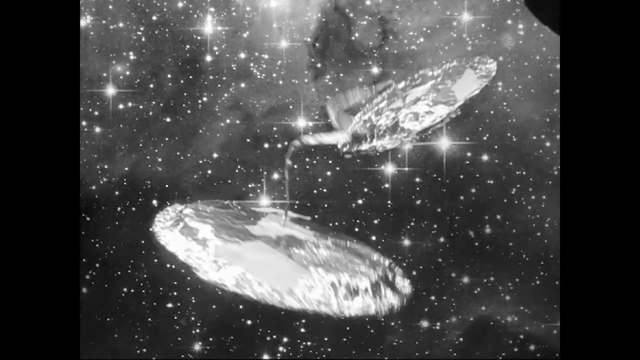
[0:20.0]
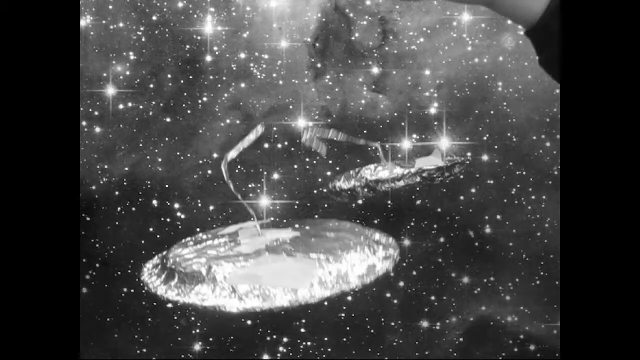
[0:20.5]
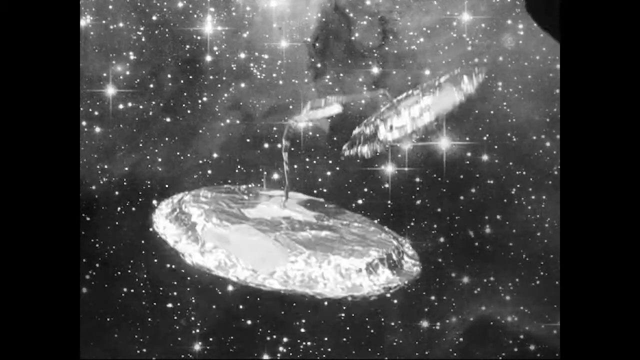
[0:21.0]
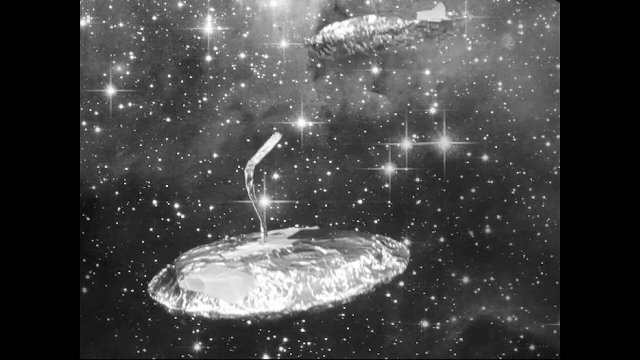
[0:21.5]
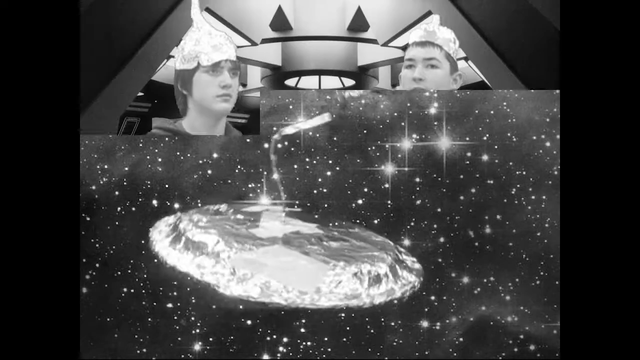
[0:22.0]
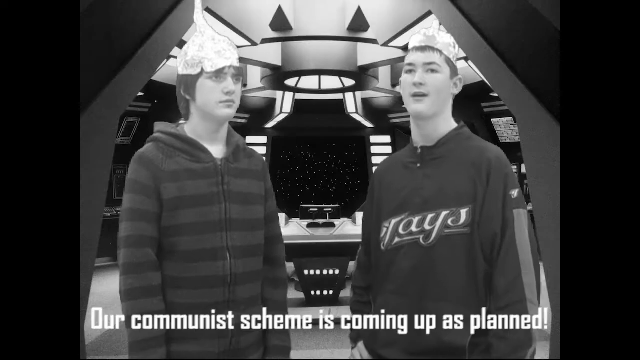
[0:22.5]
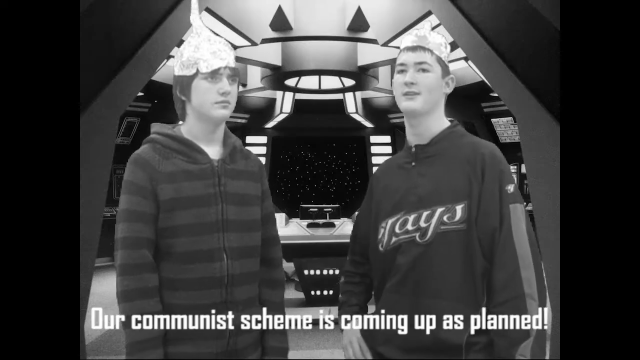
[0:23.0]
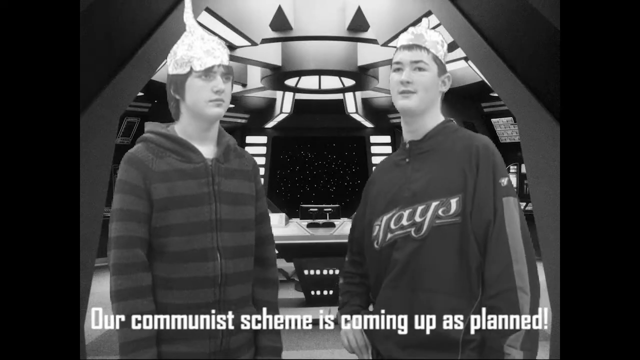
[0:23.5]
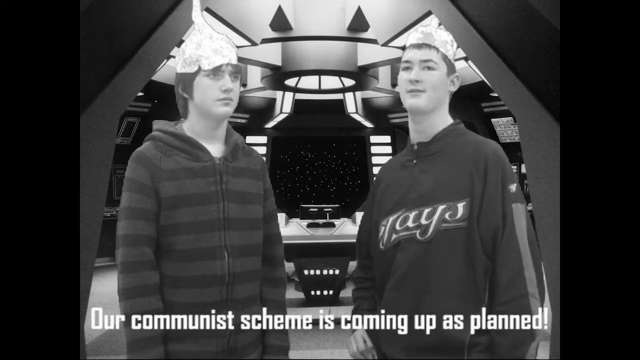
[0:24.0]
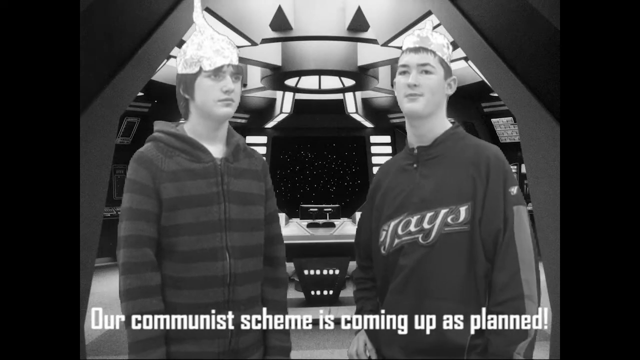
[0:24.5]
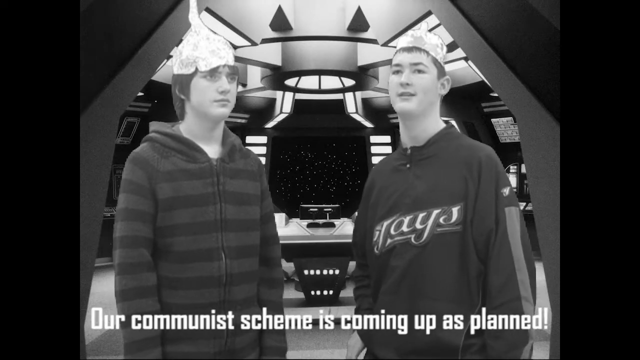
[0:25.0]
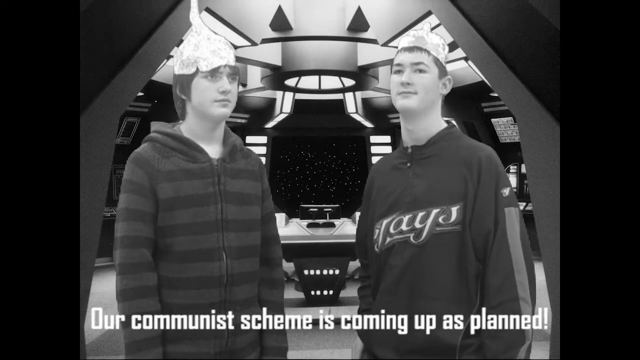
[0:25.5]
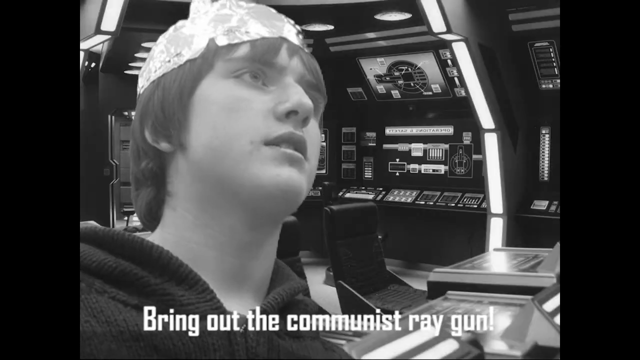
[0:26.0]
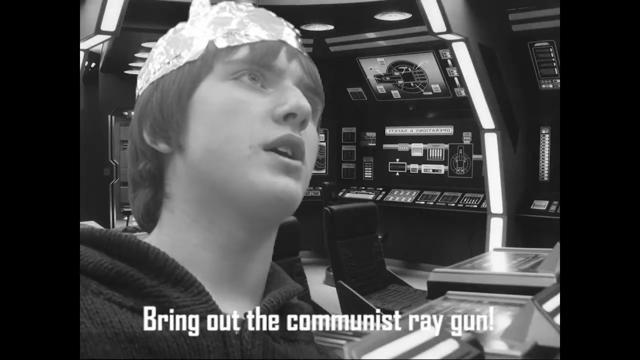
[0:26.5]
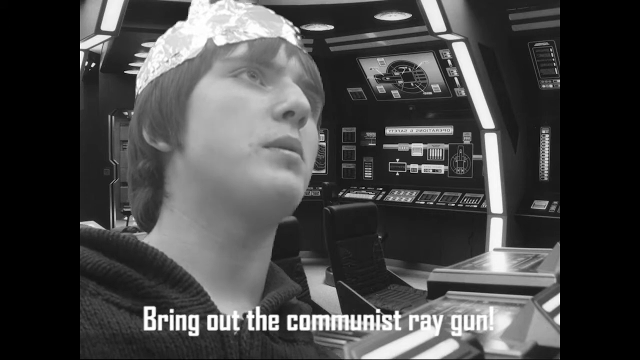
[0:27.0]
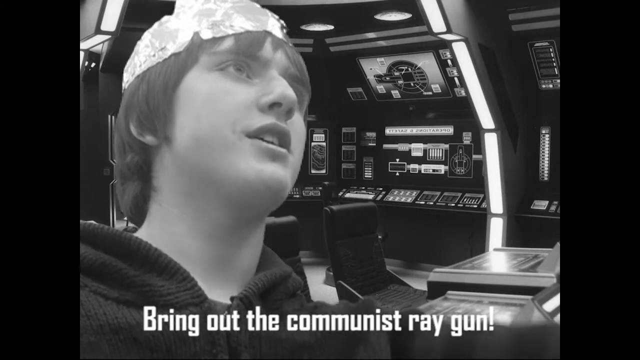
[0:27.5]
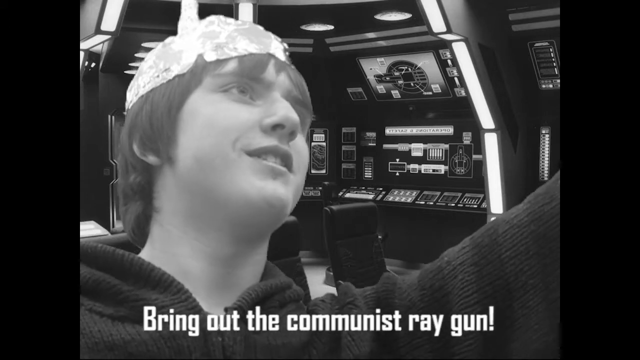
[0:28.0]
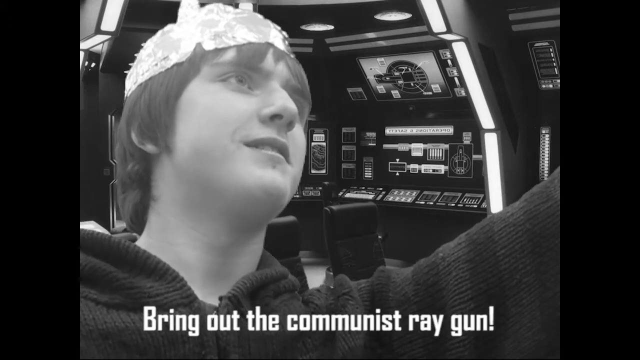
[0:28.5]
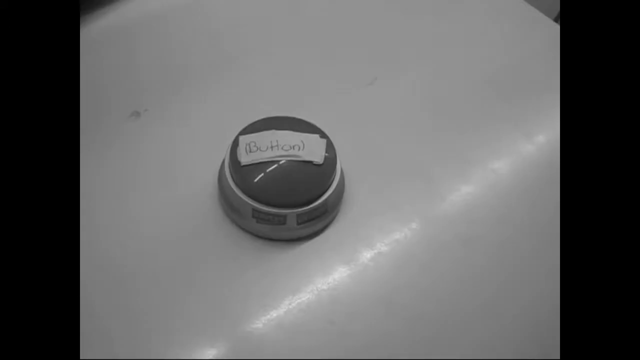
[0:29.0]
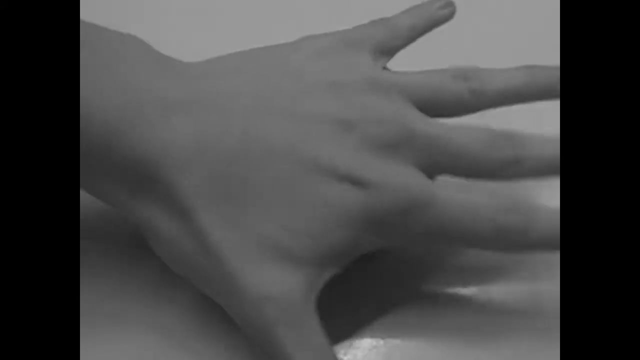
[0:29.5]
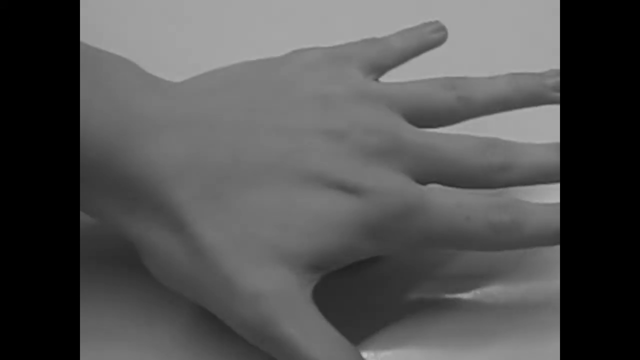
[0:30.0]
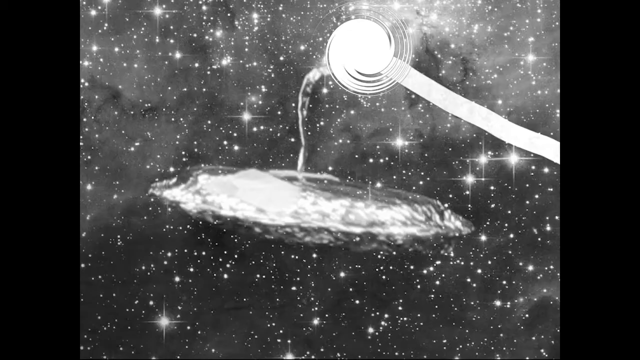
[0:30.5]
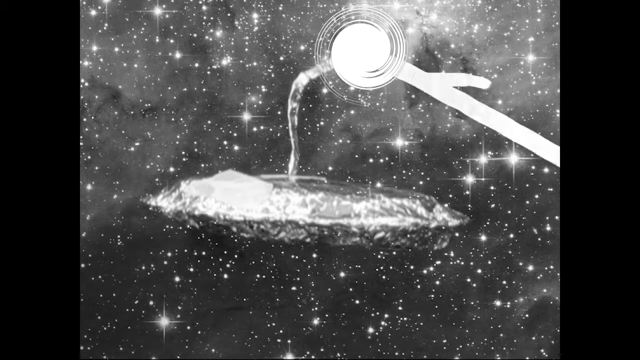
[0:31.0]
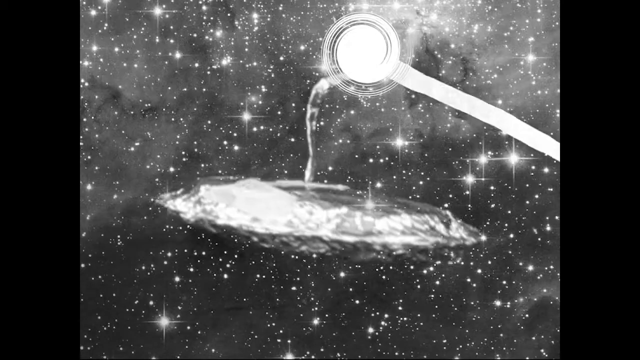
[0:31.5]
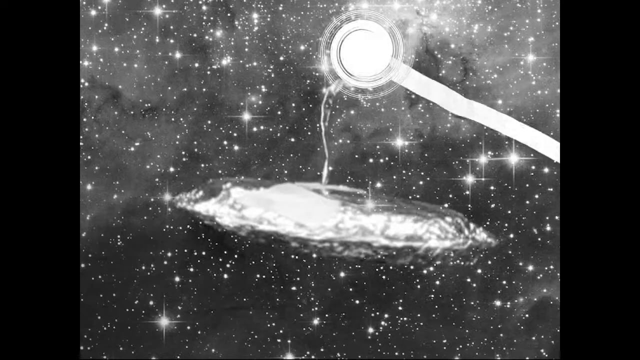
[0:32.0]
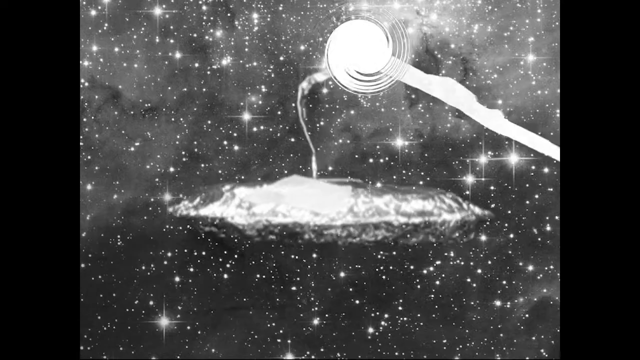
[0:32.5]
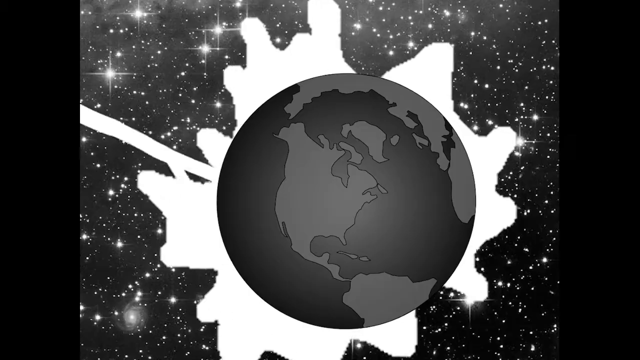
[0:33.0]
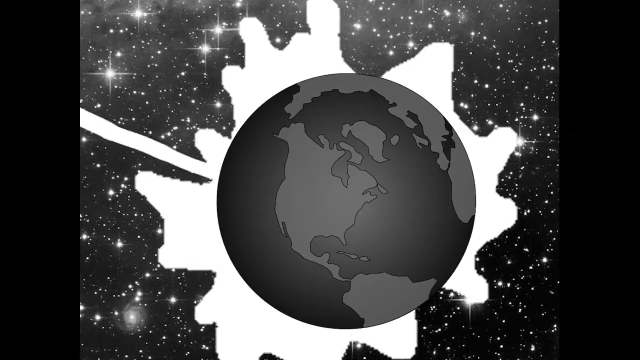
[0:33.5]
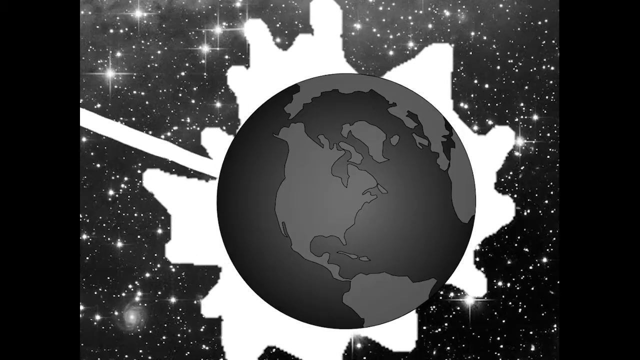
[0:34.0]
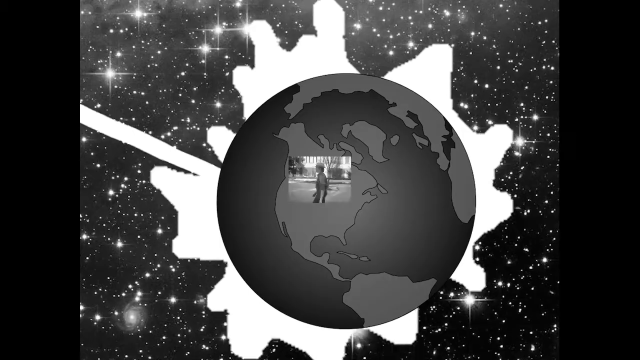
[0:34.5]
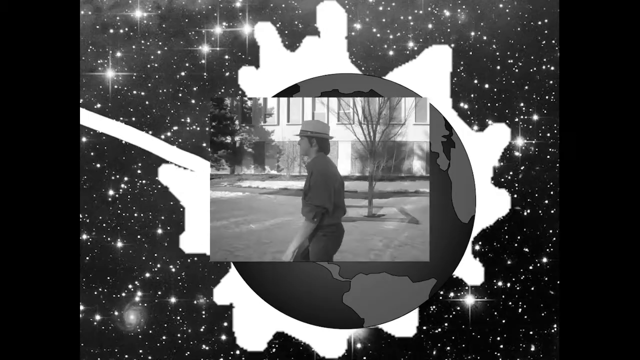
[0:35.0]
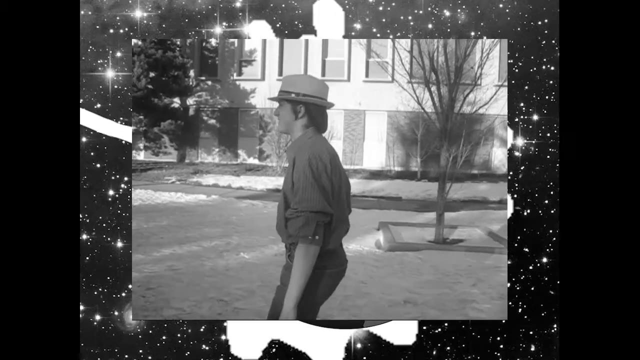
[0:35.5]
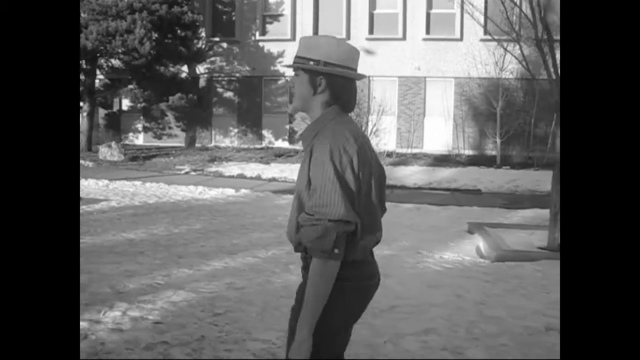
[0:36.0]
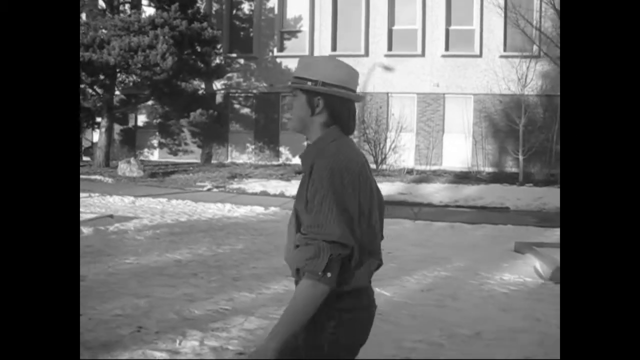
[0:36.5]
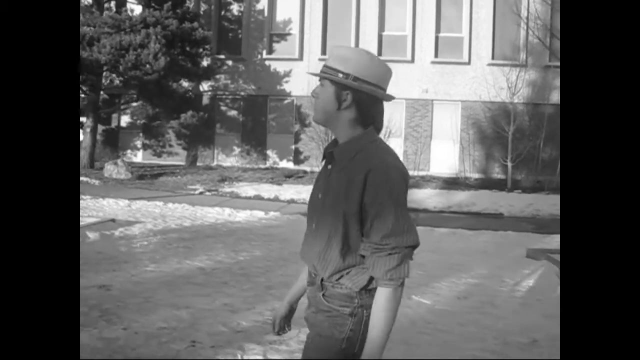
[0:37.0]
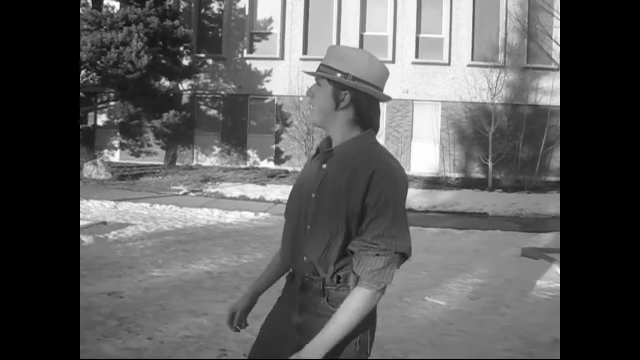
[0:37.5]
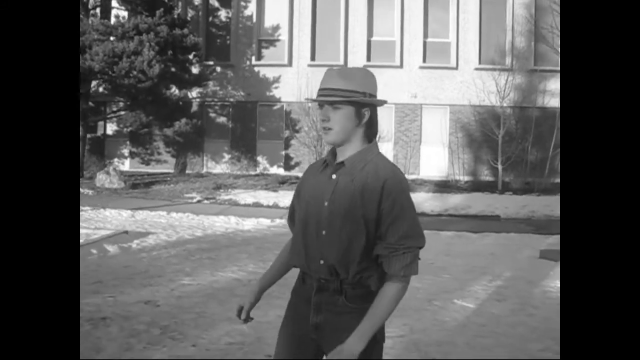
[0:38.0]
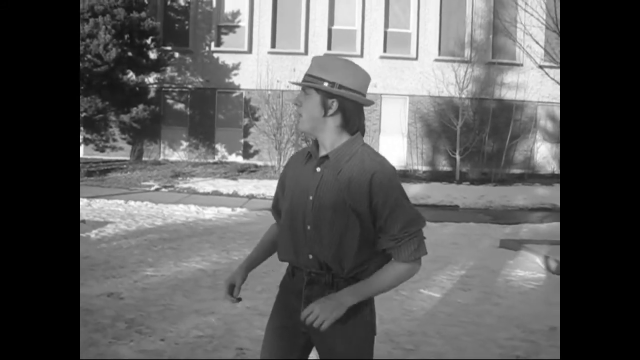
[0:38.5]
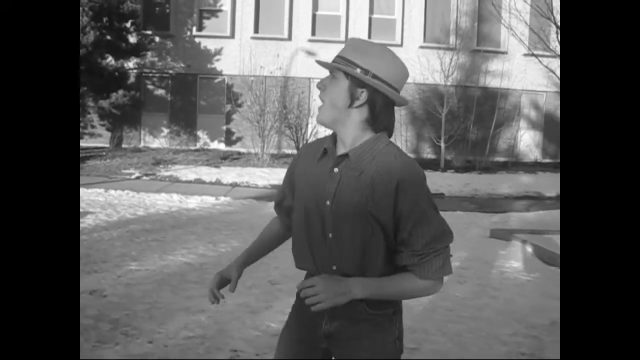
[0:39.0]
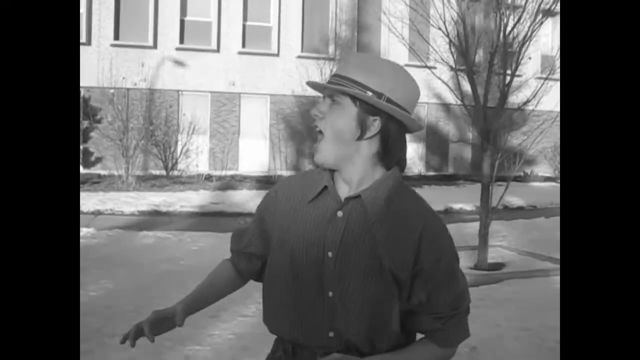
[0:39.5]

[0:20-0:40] A galaxy-type background shows very bright lights that appear to be stars, some brighter than others; about five or six of them are bigger and brighter. Two round foil-type discs have foil-like straws hanging from them, and off to the side a hand controls the two gadgets. The scene changes to two boys wearing foil cone-type hats. One wears a zip-up hoodie jacket with stripes going across it and a foil hat with a point at the top. The other wears a hoodie that says "Rays" or "Jays" on it and also a foil-type hat. Both stand in front of what seems to be the inside of a ship, with a window-type opening through which stars are visible. They press a button, and the two foil pieces are seen.